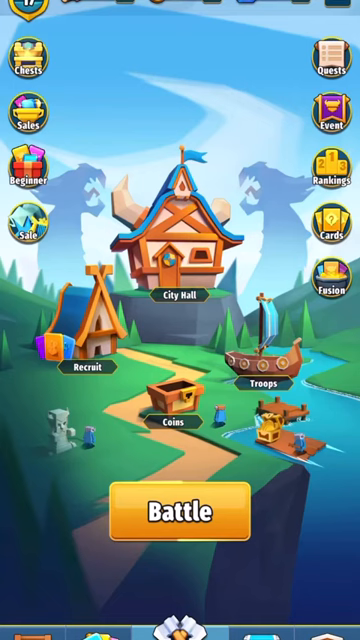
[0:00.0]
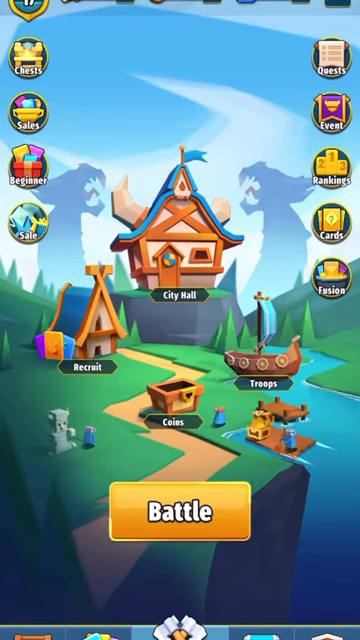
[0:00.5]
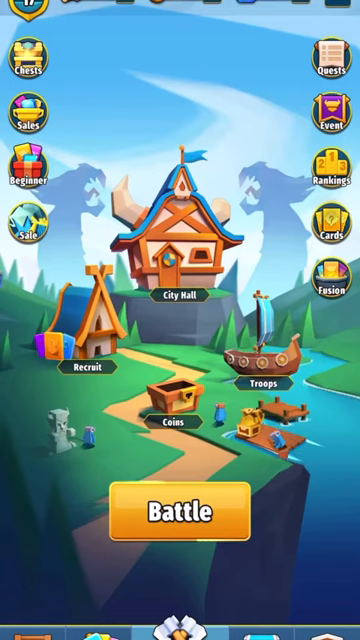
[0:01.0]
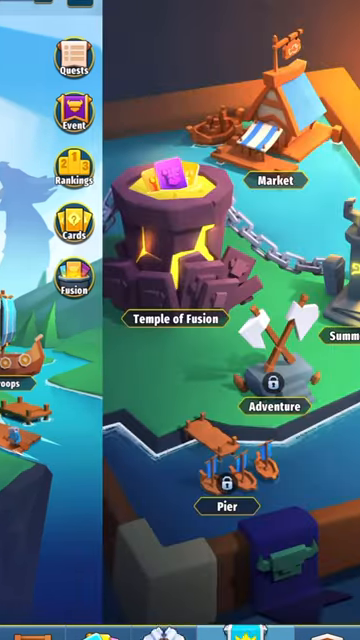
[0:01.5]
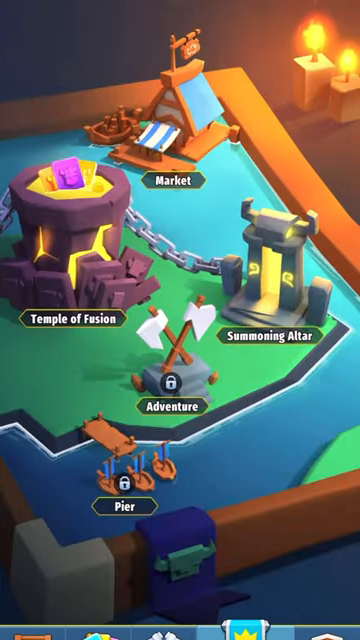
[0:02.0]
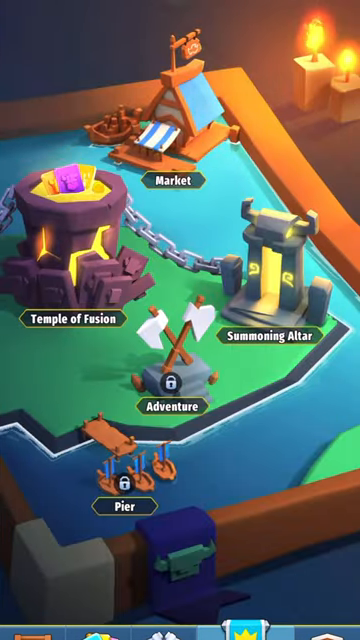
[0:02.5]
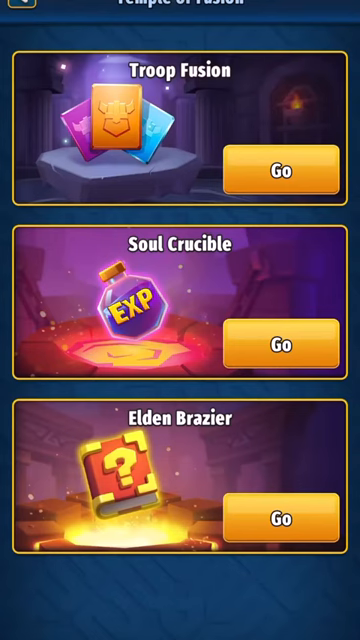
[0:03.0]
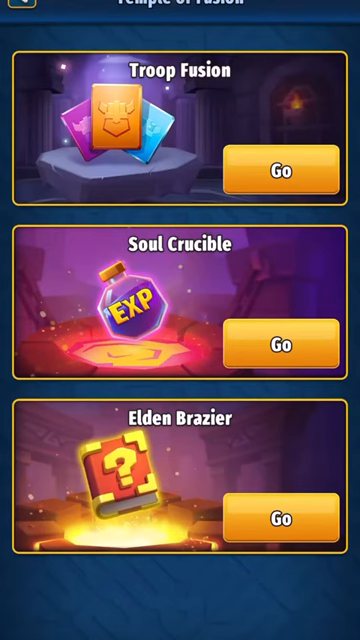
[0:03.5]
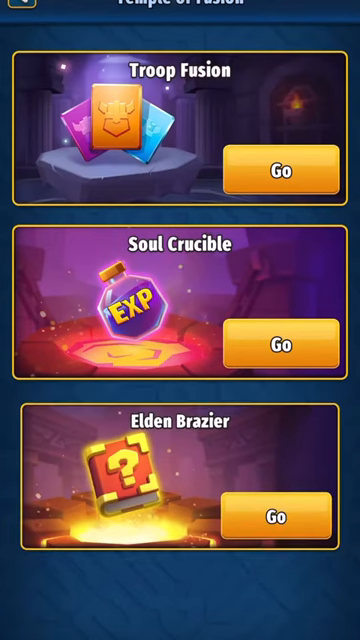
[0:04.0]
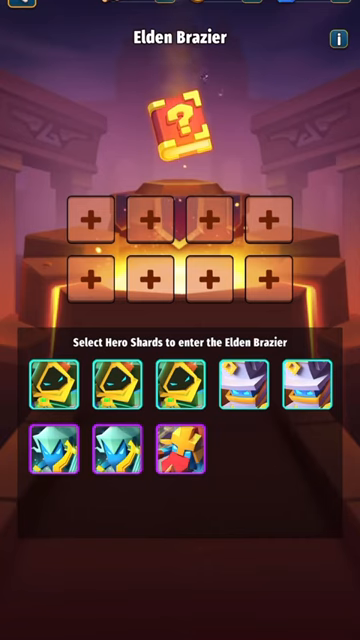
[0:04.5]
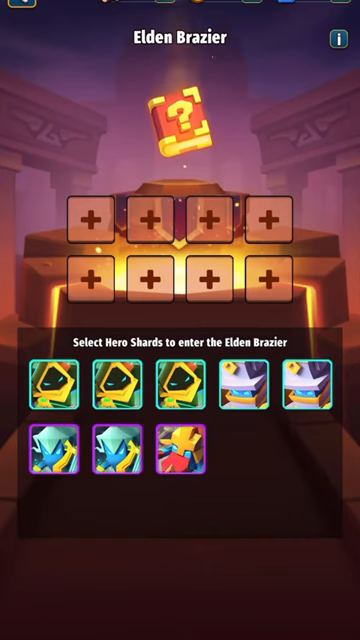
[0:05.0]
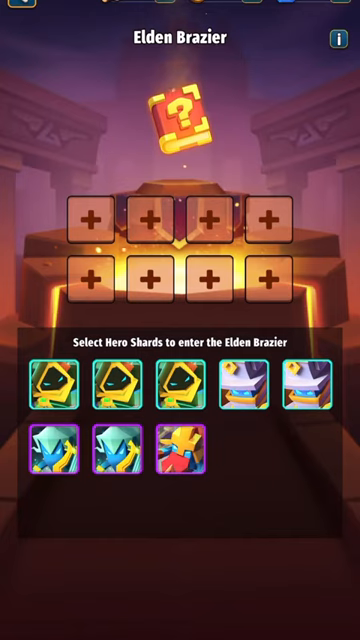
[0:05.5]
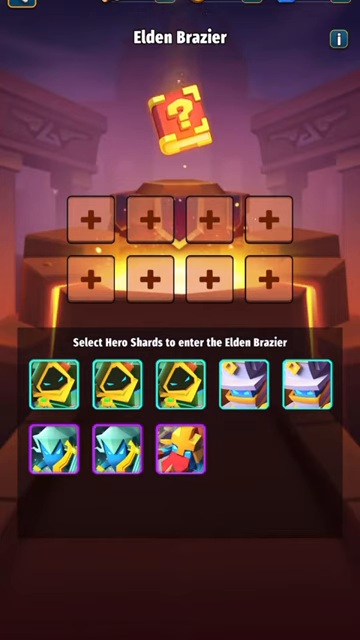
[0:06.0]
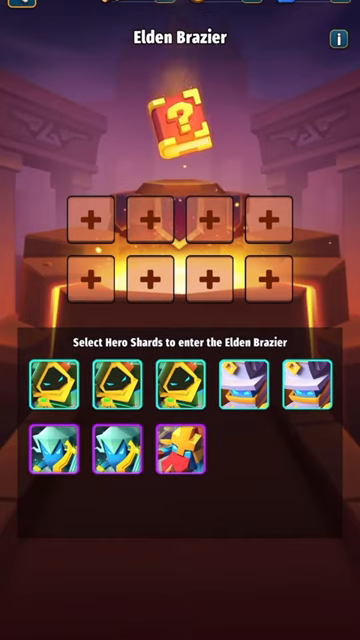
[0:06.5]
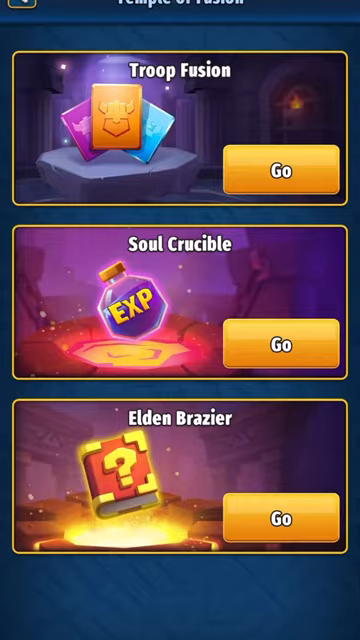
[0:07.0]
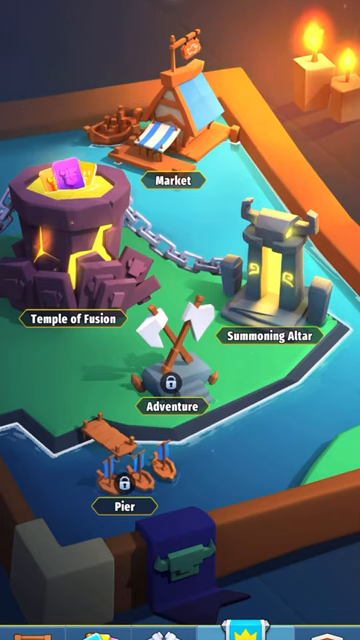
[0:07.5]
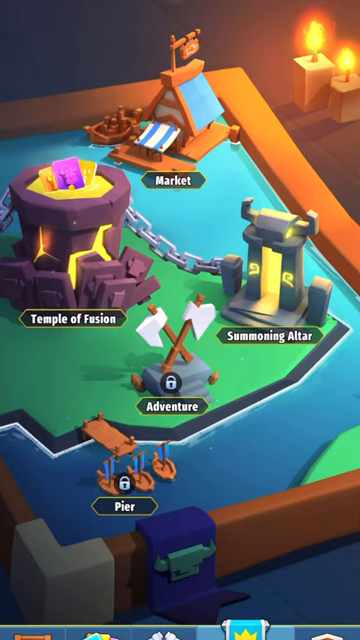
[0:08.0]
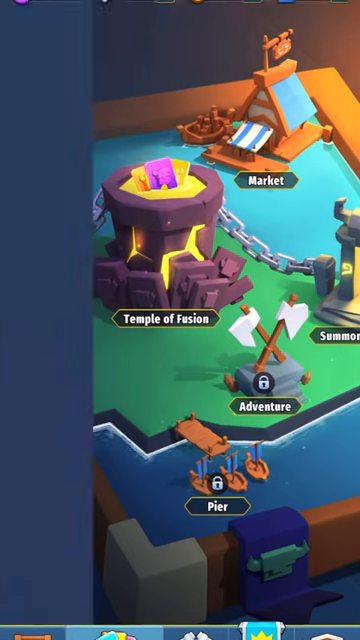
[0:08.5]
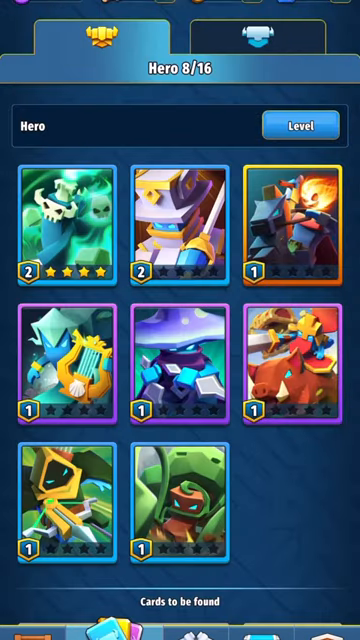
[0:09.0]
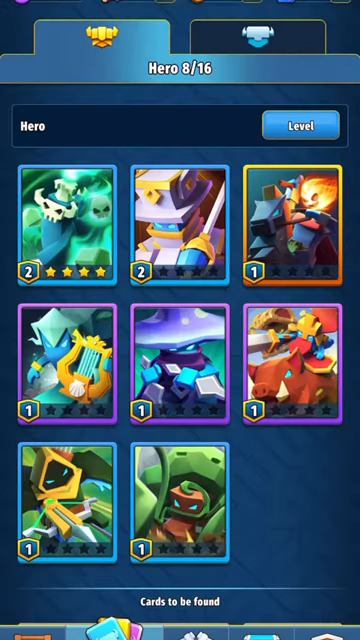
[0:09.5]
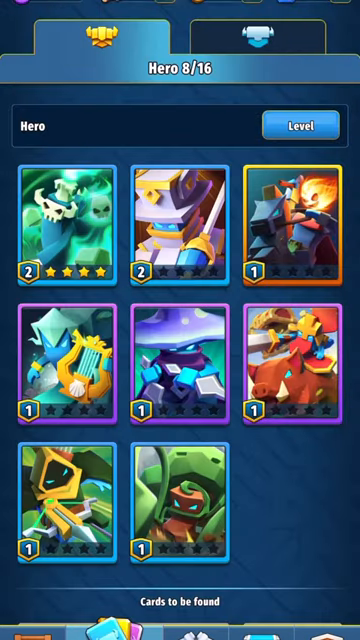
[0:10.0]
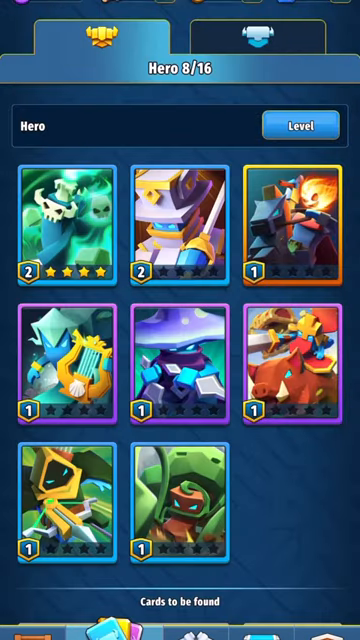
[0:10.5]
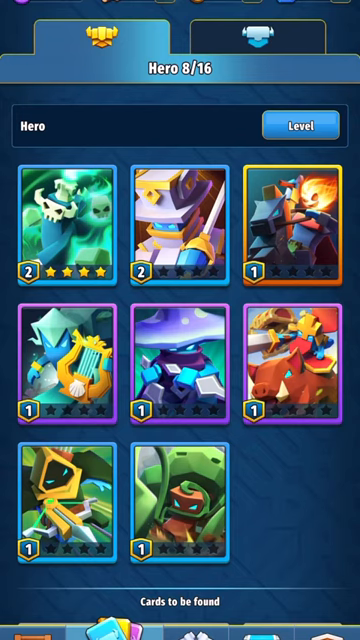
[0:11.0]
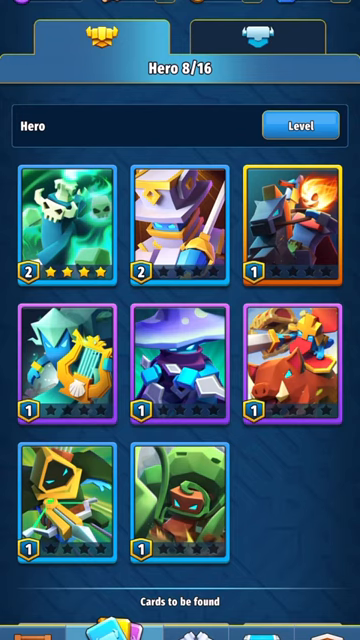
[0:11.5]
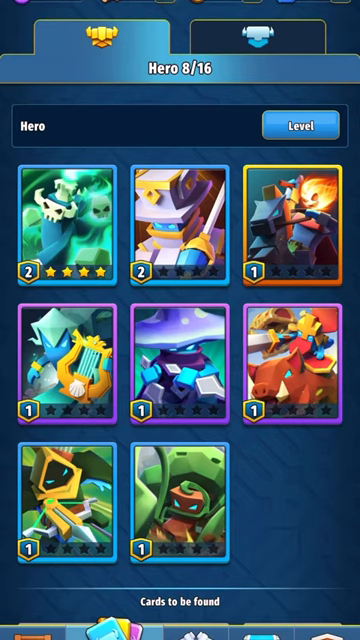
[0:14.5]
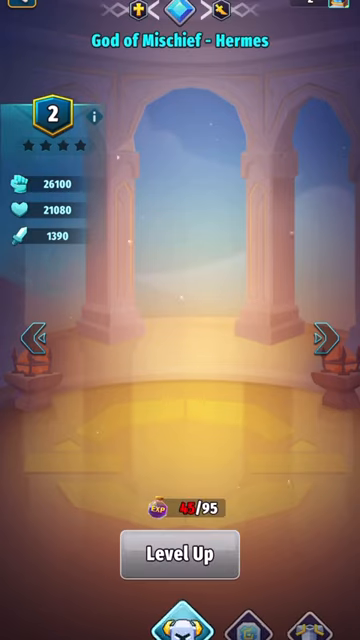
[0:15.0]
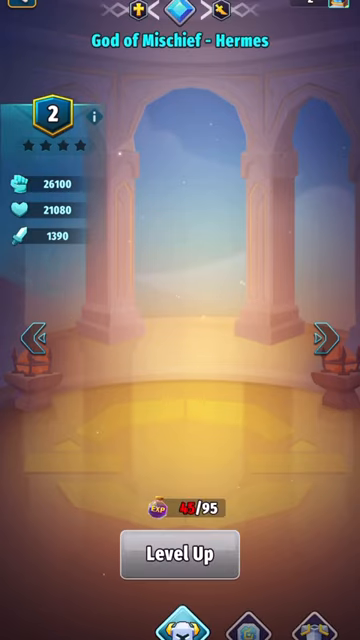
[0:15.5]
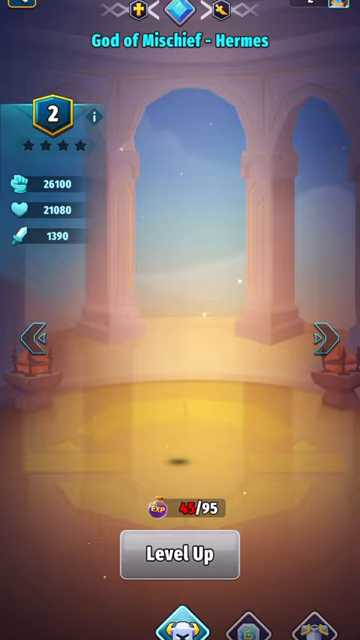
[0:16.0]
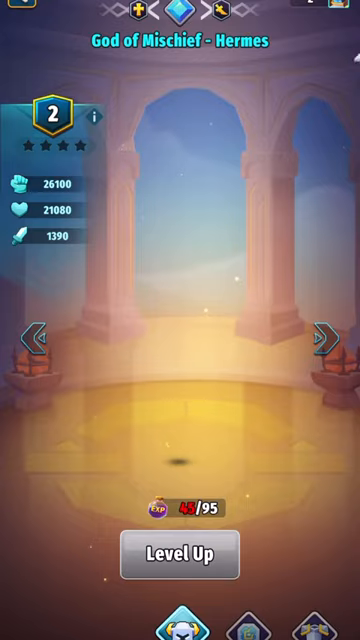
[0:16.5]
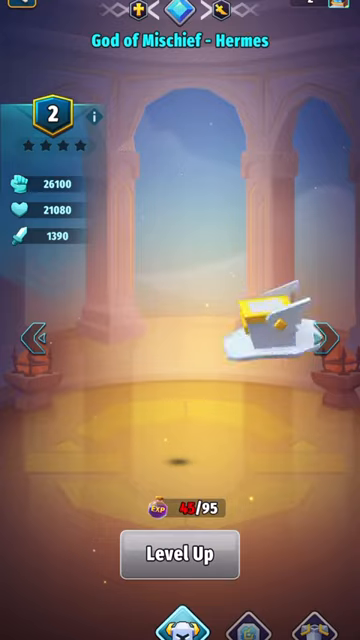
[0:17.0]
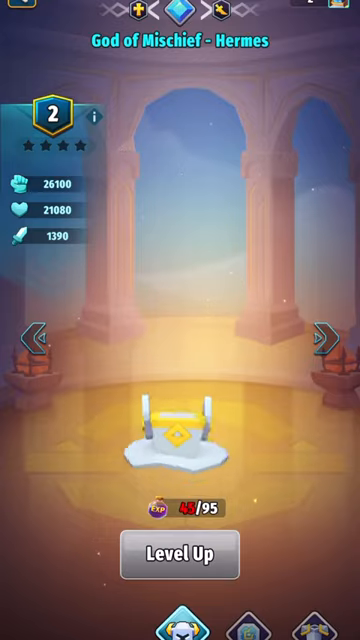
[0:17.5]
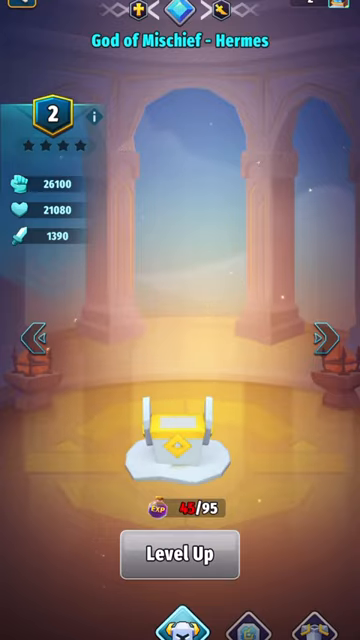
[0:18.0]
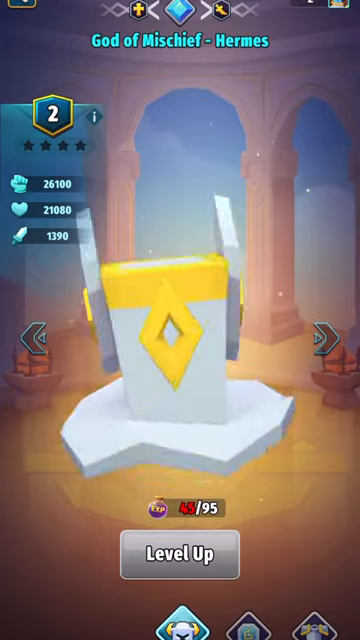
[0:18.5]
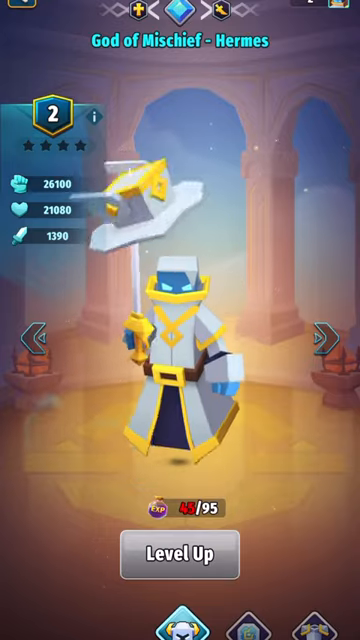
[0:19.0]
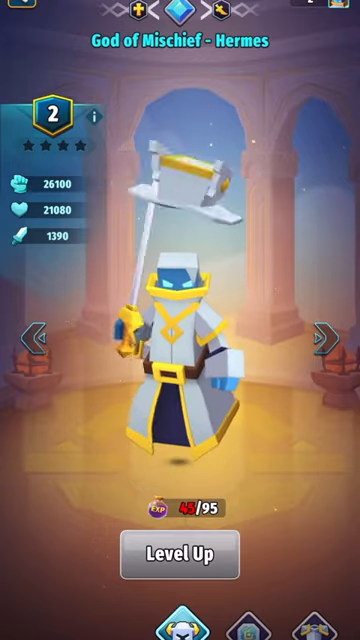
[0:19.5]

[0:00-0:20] What appears to be a mobile game is screen-recorded. Four small items are displayed on a large landscape, labeled "City Hall", "Recruit", "Coins" and "Troops". Other buttons around the interface include "Sale", "Rankings", "Cards" and "Fusion", and there is a yellow battle button at the bottom of the screen. The Temple of Fusion is then pressed, and a couple of tasks open up, each with a Go button next to it. One of them appears to be pressed, and a game comes up on the screen: eight plus signs surrounded by boxes, with a book bearing a question mark on top of them. Underneath are eight different icons with white text above them, reading "Select Hero Shards to enter the Elden Brazier." The user seems to exit the Temple of Fusion and then opens a page showing different card-like icons, apparently different players, with level numbers underneath.